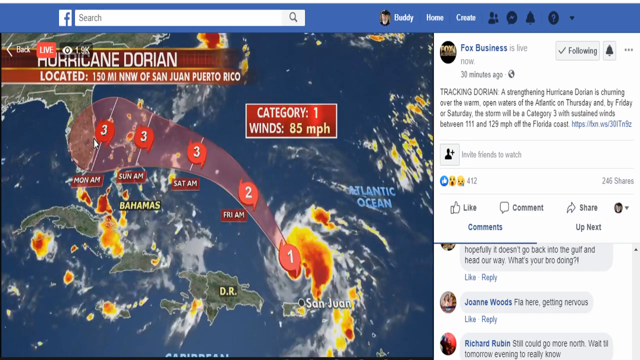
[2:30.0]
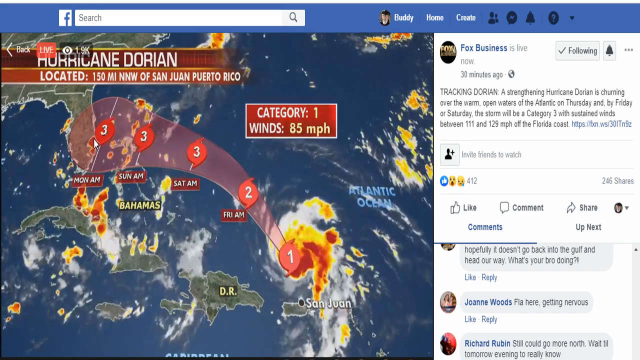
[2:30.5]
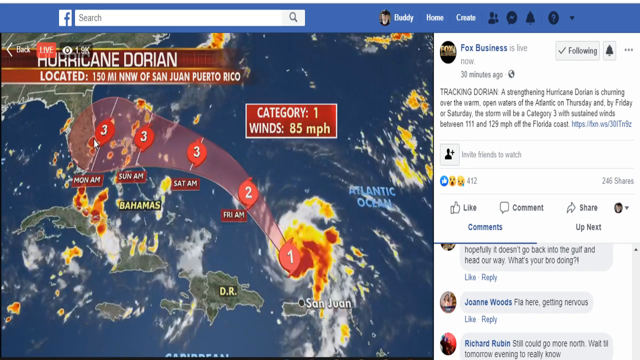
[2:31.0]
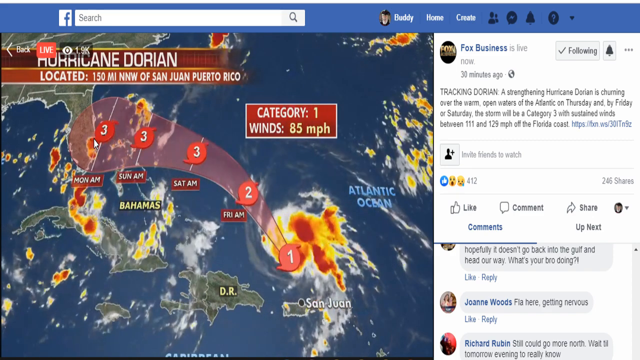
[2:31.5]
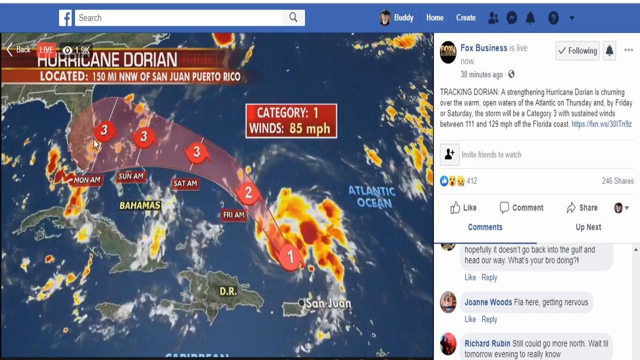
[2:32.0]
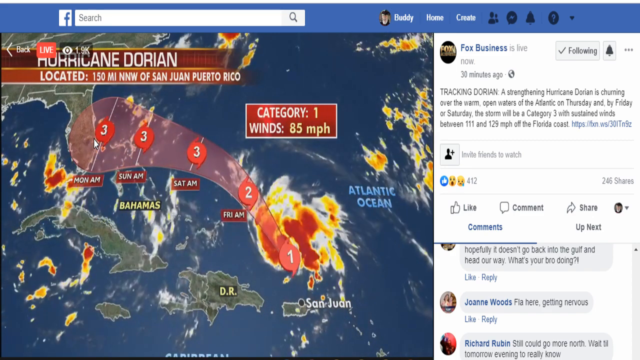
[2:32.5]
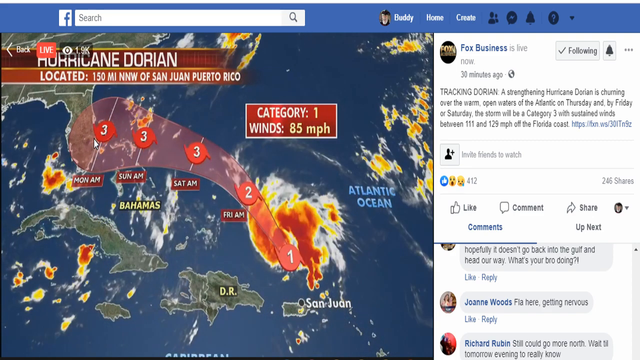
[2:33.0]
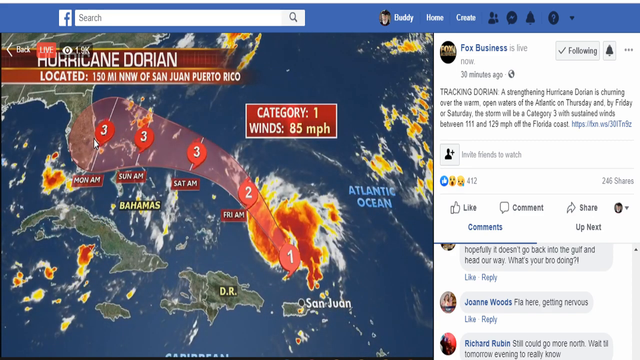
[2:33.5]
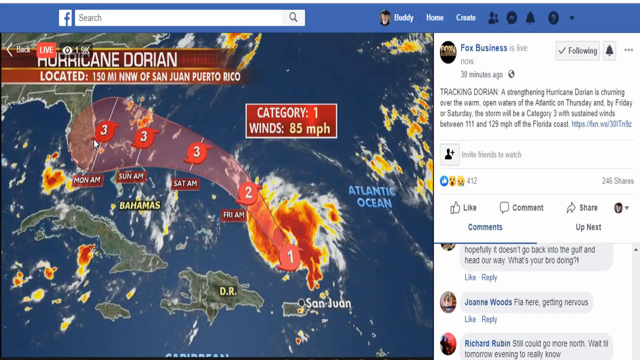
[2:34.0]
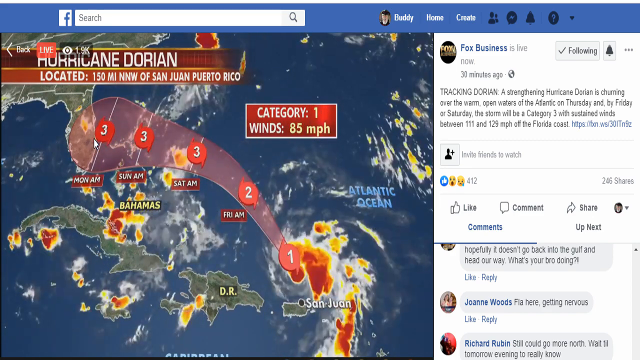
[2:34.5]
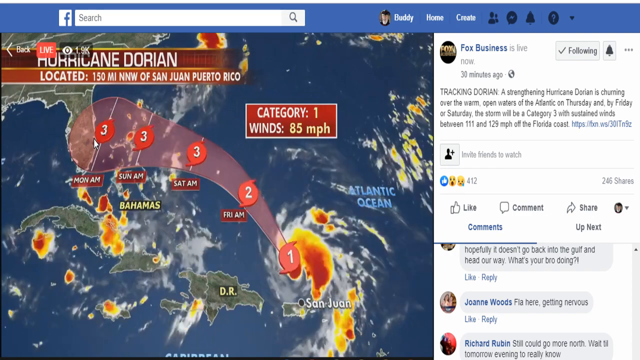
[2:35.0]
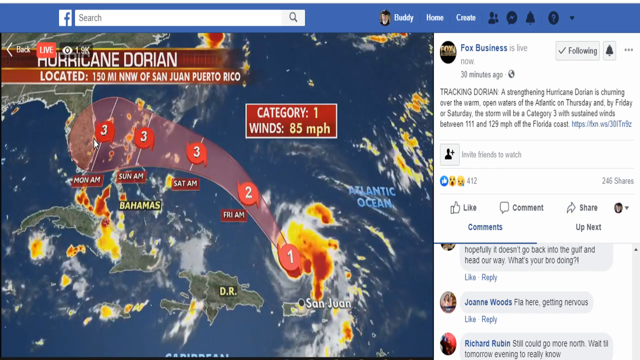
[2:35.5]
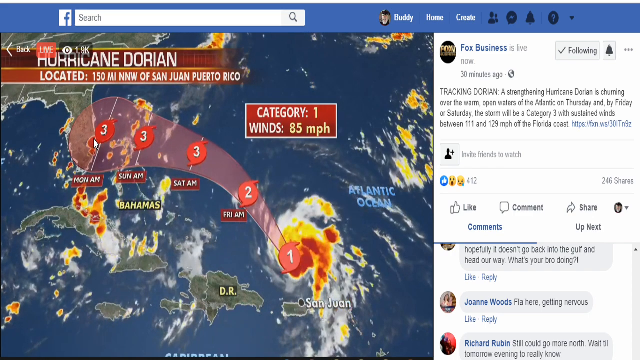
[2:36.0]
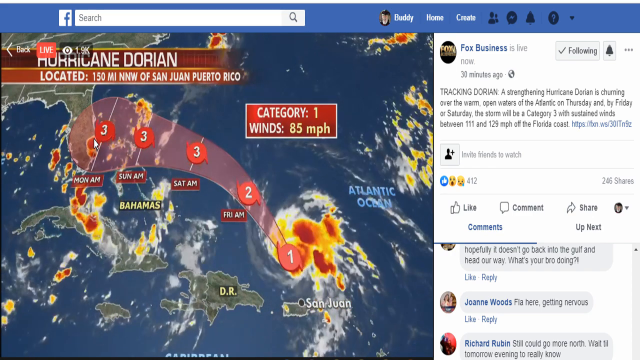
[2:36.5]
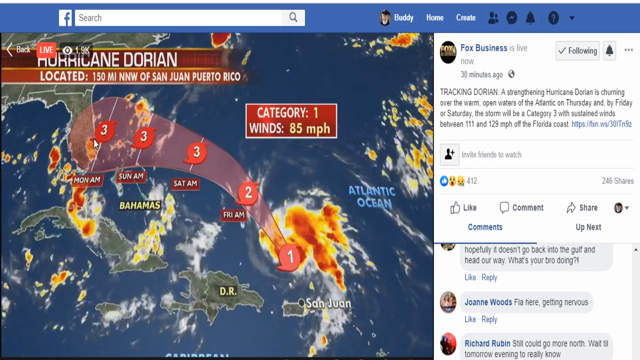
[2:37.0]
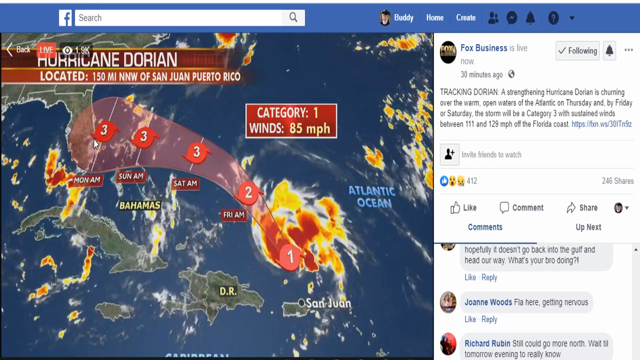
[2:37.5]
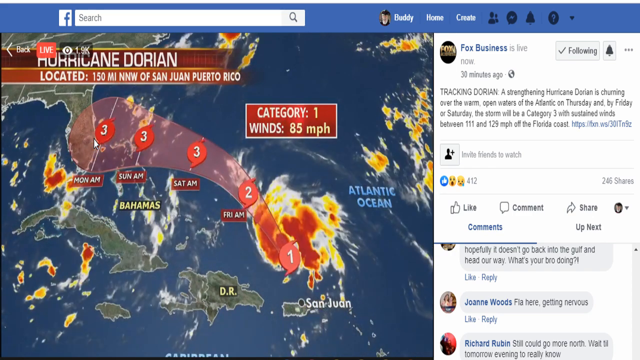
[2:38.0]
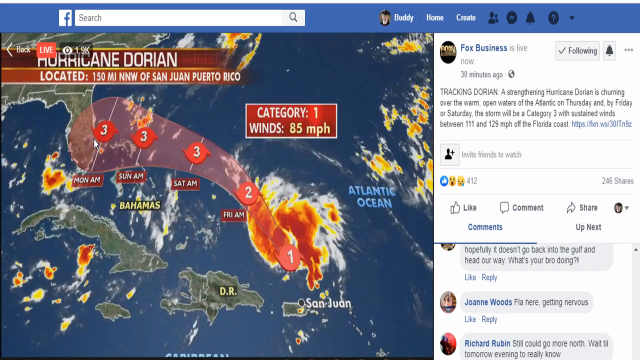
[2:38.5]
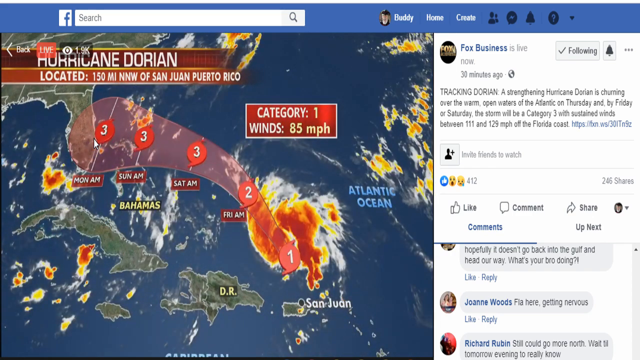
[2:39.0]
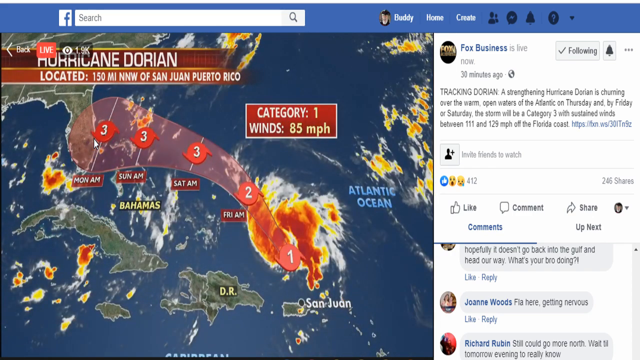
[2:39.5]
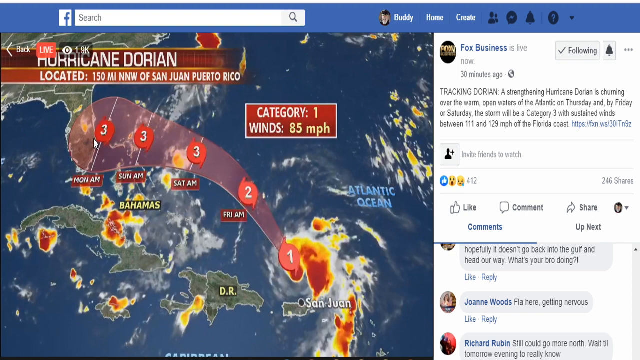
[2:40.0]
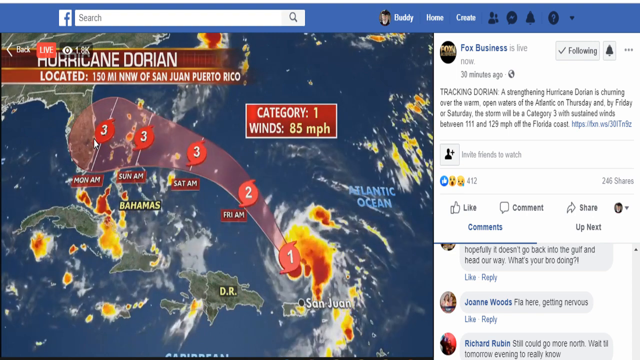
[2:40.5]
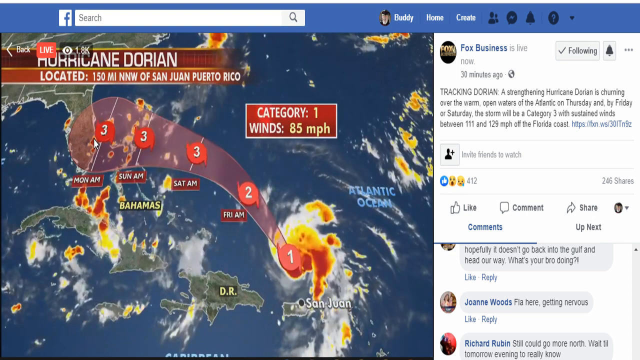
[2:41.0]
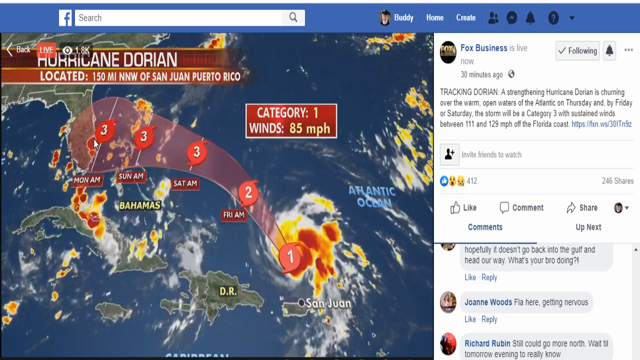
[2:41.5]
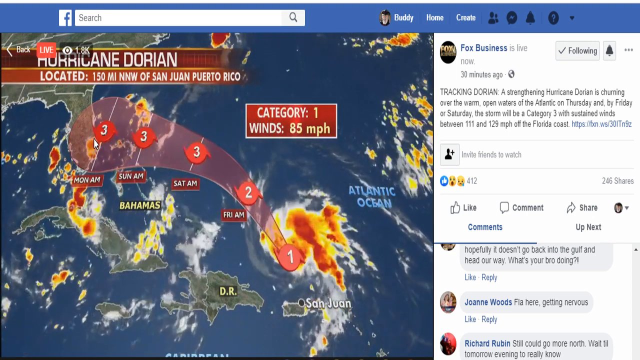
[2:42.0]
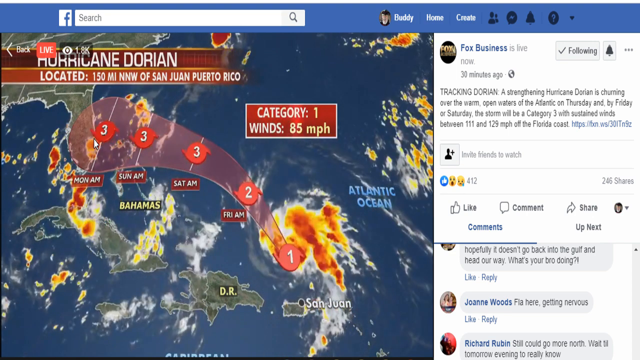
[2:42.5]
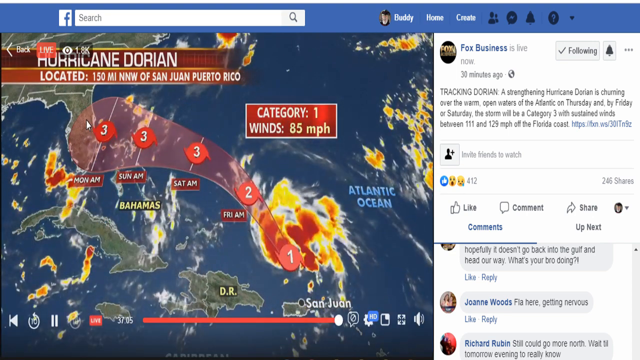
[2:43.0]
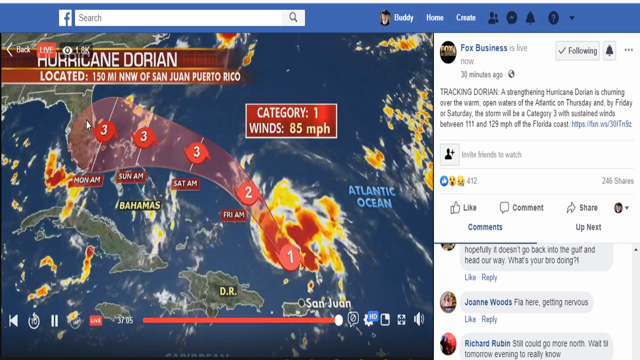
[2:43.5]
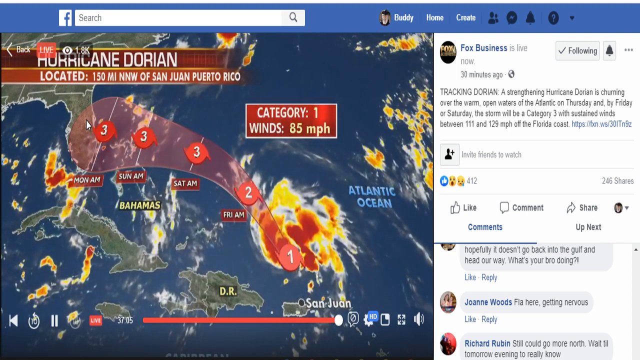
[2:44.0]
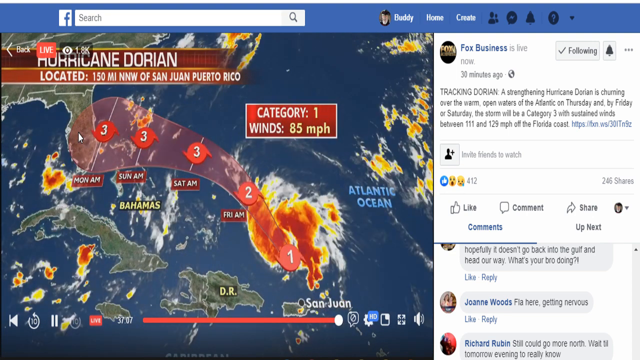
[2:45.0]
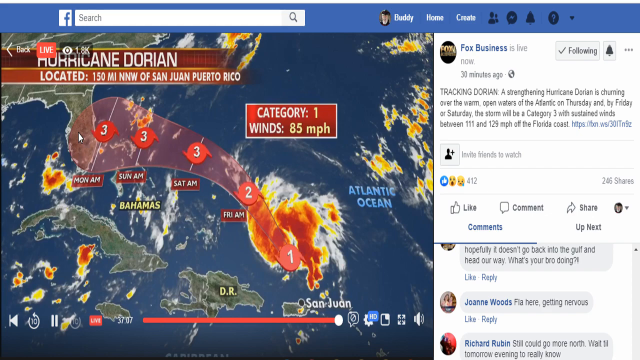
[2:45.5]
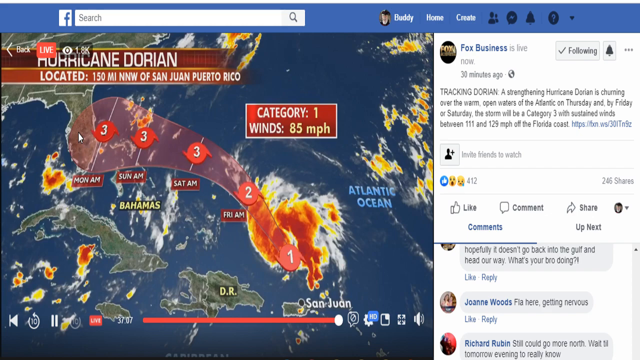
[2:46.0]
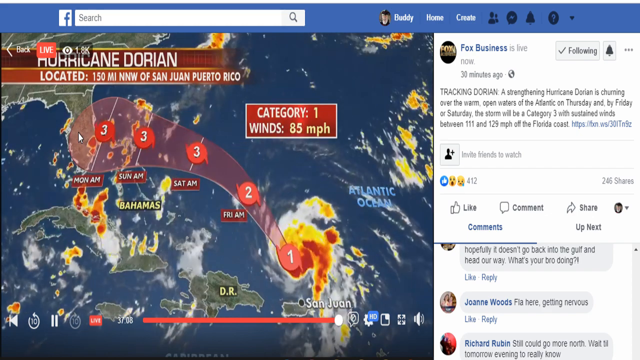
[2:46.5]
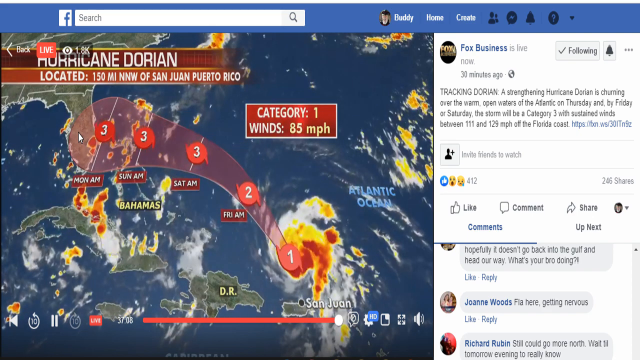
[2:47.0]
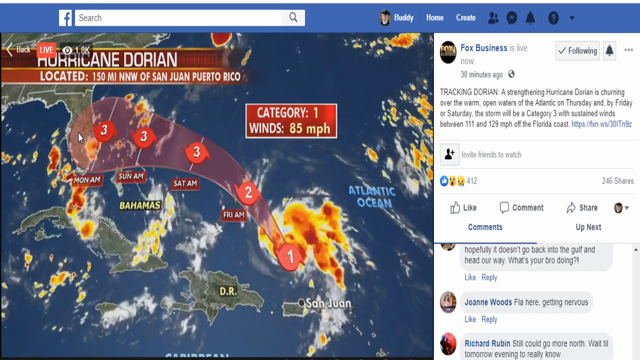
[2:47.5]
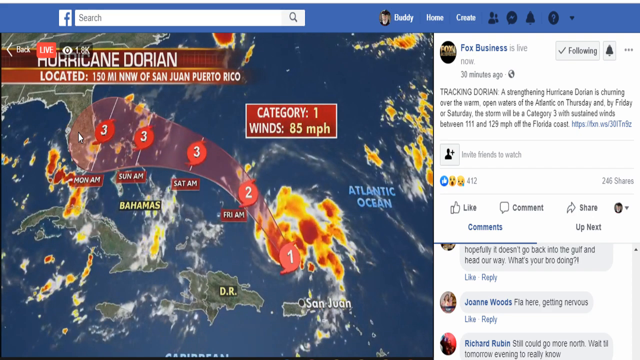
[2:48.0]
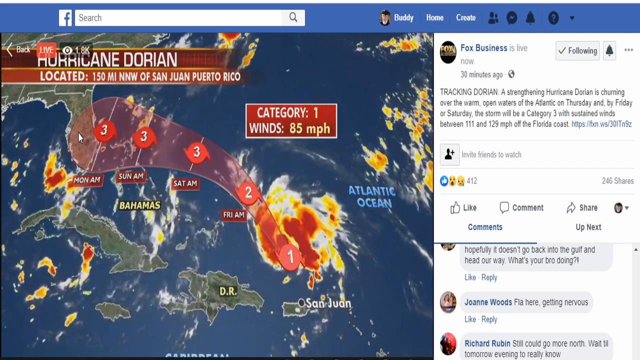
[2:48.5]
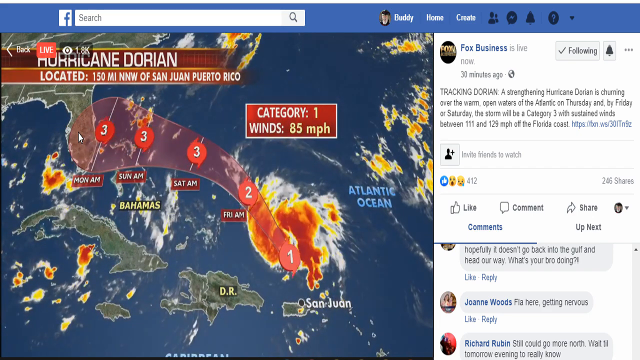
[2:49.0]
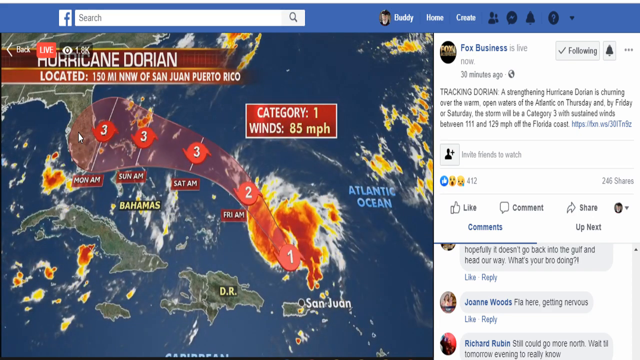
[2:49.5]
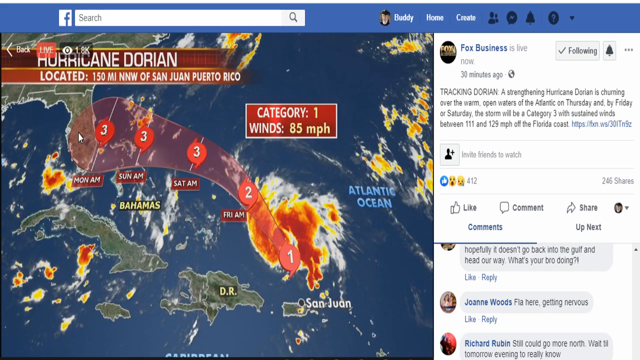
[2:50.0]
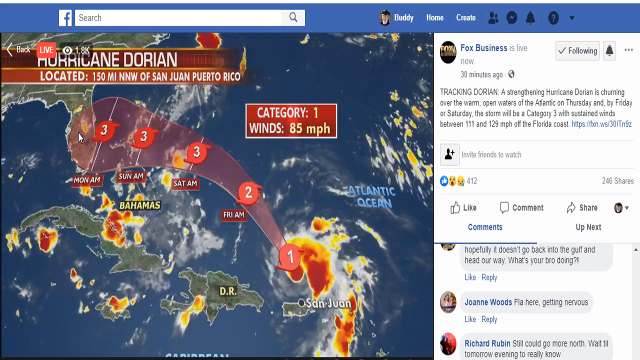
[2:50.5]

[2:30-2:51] Comments continue. Looking closely, the red blob contains the numbers 1, 2 and 3 inside a circle shaped like a spinning hurricane. The map shows part of Florida and the other states near it, as well as the Bahamas and the Dominican Republic. The animation loop continues, showing the eye of the hurricane and a predicted path going northwest, closer to the Bahamas and Florida, indicating it can reach Category 3 by the time it hits Florida. There apparently are no new comments. The post has over 400 reactions, most of them surprised or sad, 246 shares, and more than 1,500 people watching.